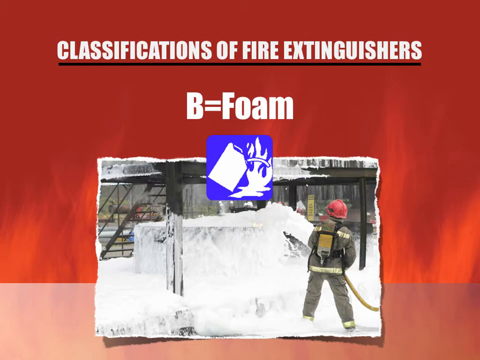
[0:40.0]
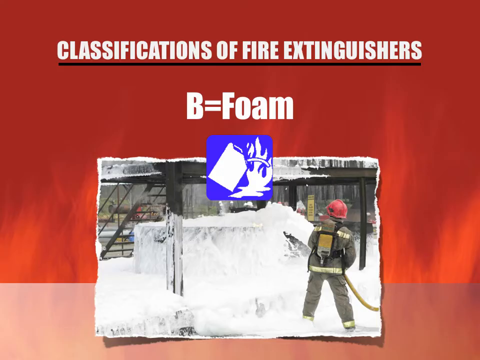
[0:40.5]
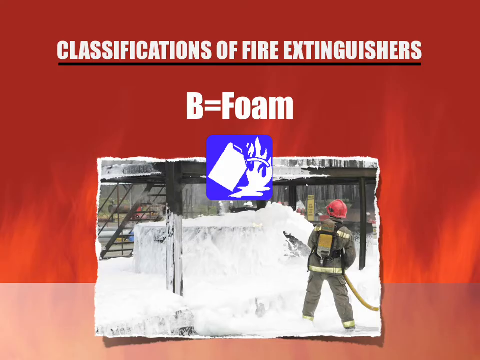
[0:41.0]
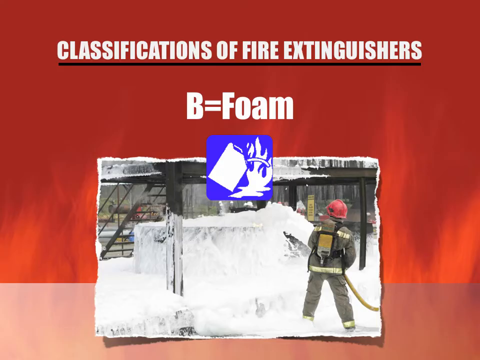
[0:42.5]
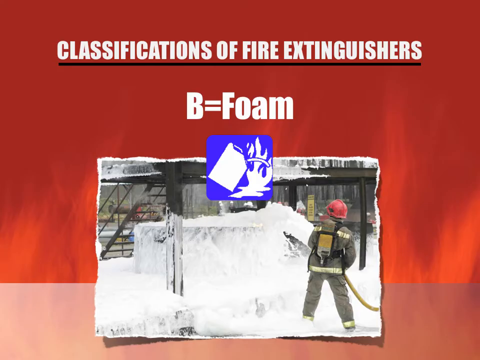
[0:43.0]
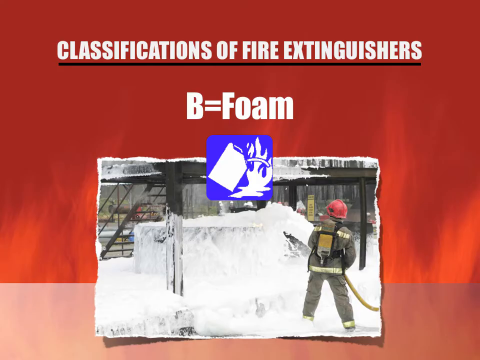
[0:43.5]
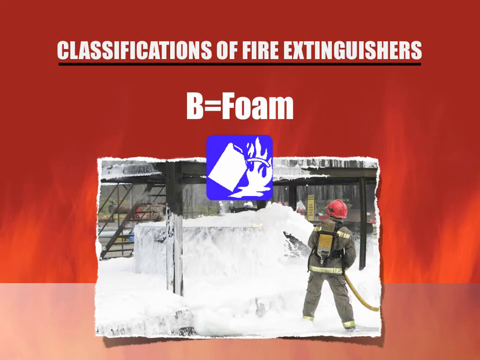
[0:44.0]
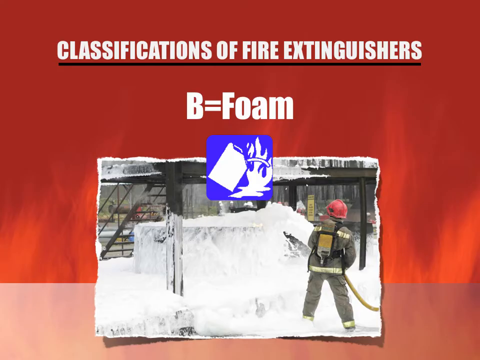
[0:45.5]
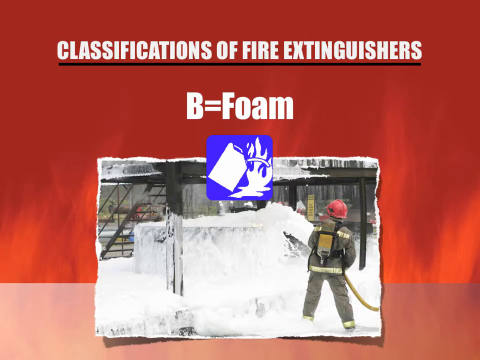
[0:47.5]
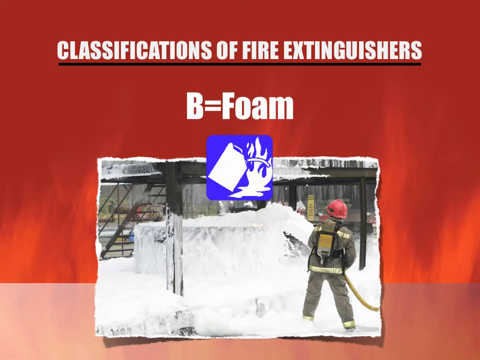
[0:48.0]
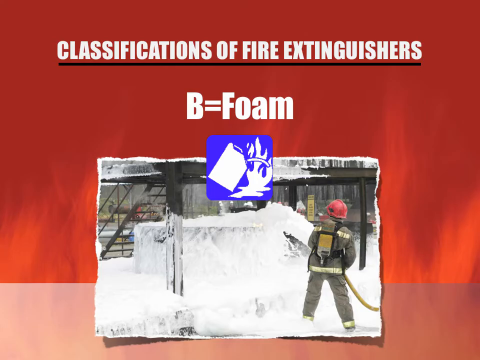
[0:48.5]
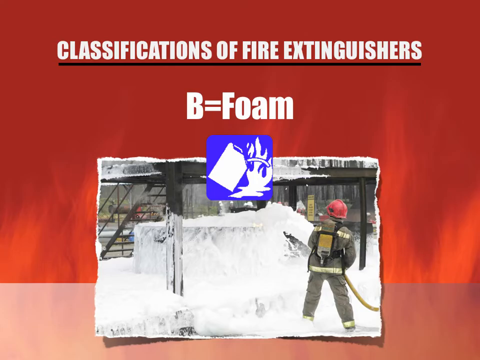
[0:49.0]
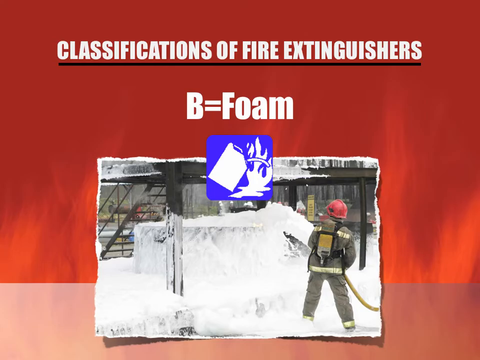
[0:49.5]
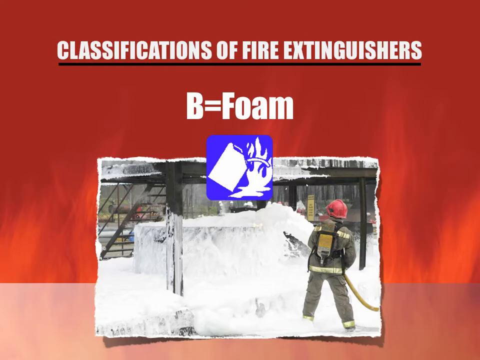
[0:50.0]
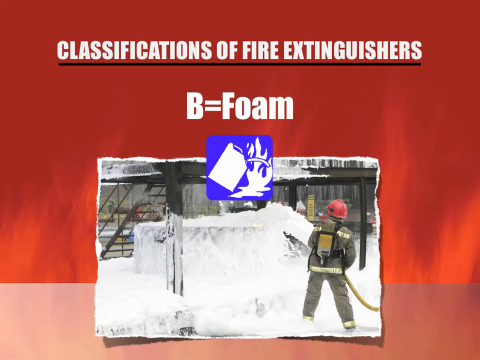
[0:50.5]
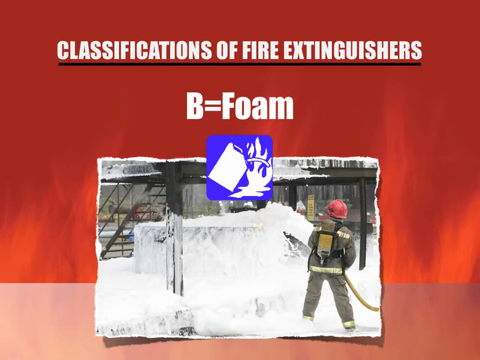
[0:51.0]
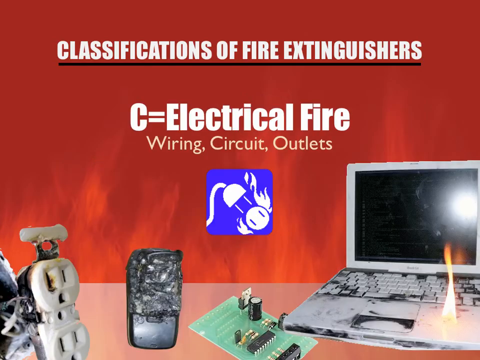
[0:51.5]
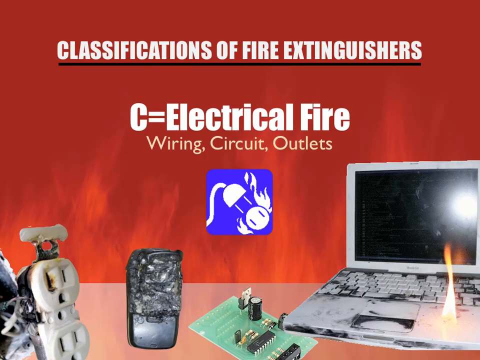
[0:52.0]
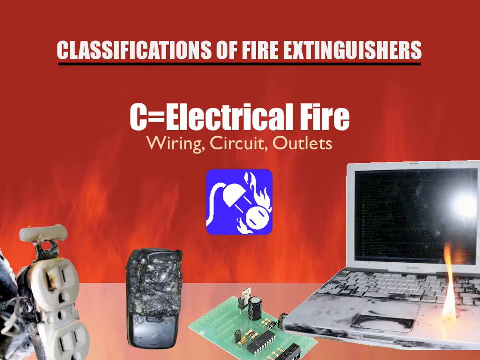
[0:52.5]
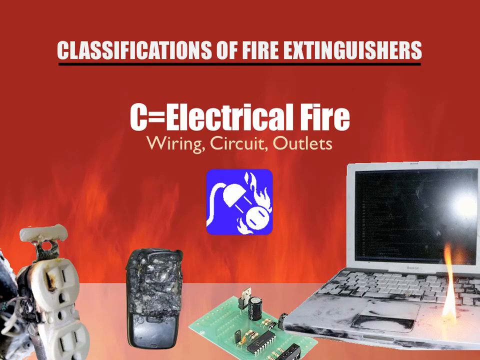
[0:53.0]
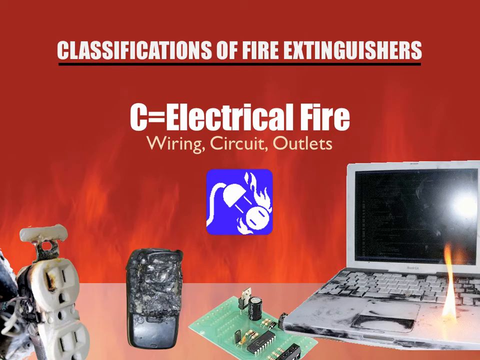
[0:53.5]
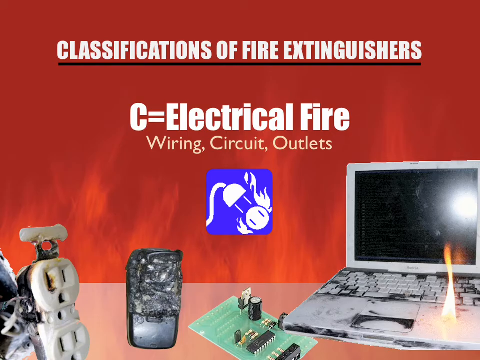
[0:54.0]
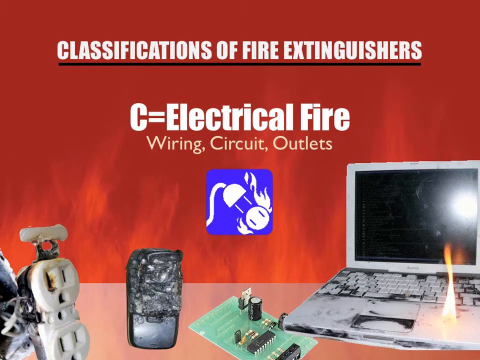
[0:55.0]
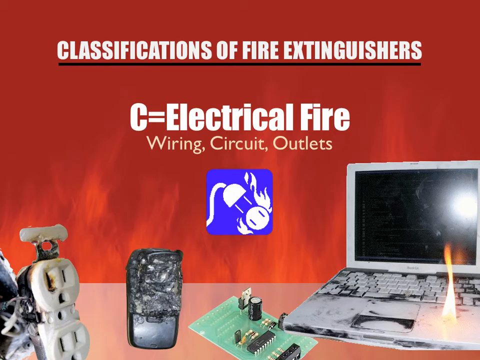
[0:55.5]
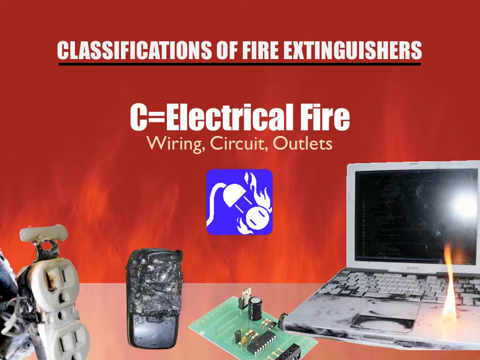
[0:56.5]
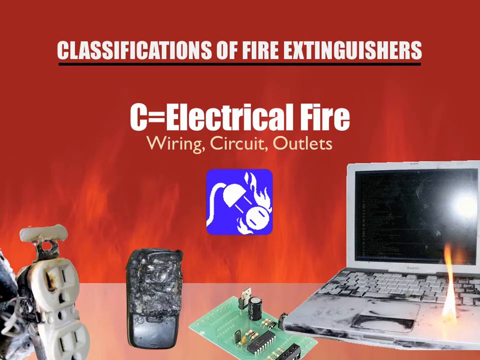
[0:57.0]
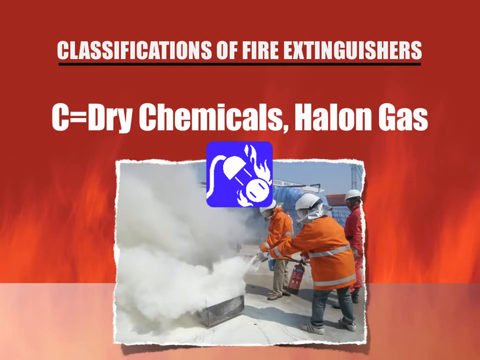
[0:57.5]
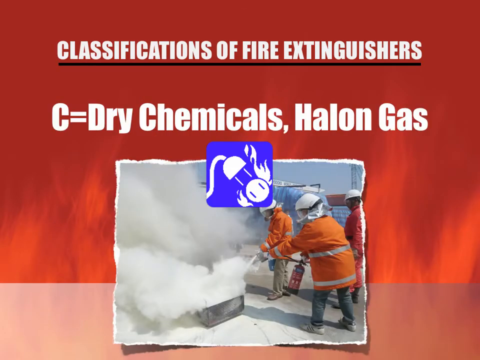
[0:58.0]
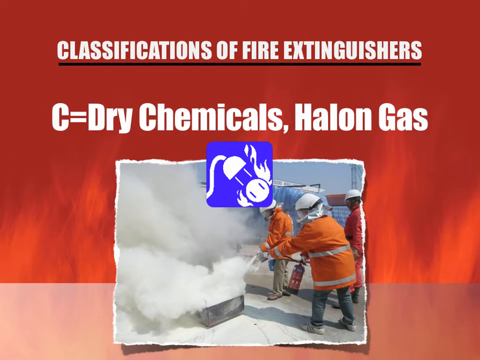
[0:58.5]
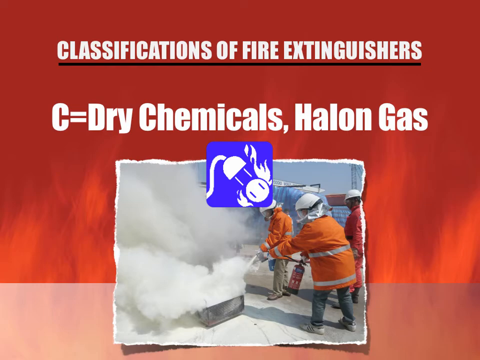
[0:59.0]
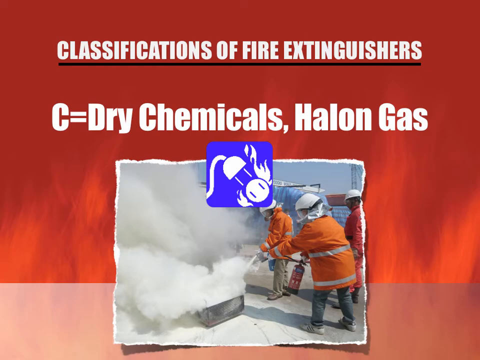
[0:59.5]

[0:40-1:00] A is shown with water, used when using a fire extinguisher. B covers flammable liquids: gasoline, kerosene, grease and oil, and B also shows foam. A man is trying to stop a fire, and the fire extinguisher shows fire along with what looks like some water. A burning laptop is also visible.